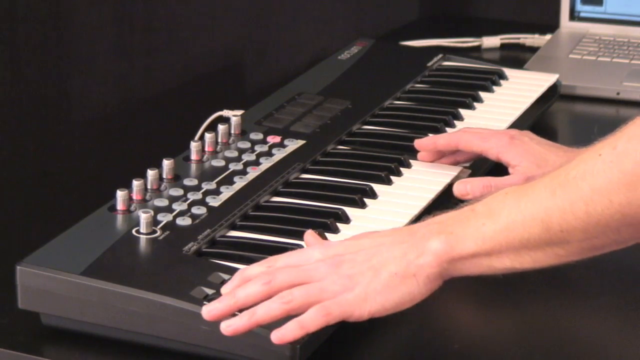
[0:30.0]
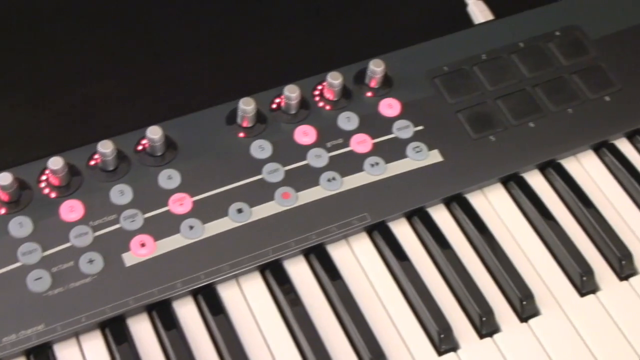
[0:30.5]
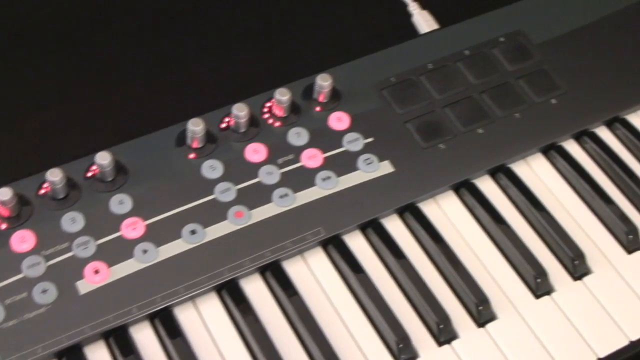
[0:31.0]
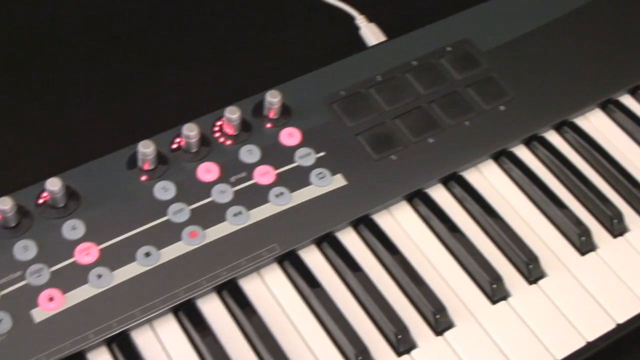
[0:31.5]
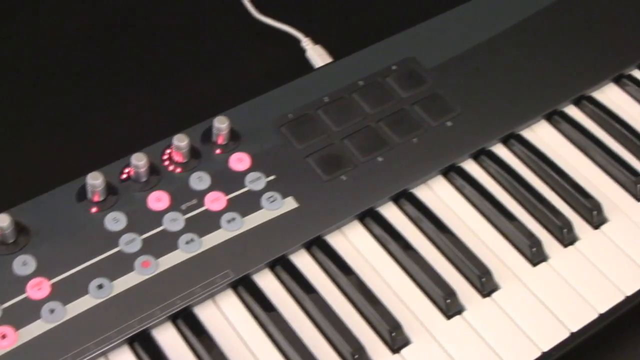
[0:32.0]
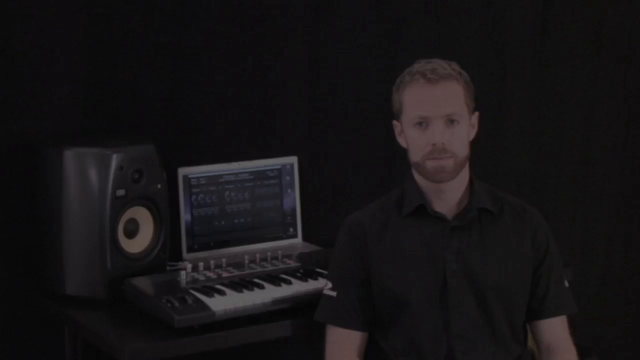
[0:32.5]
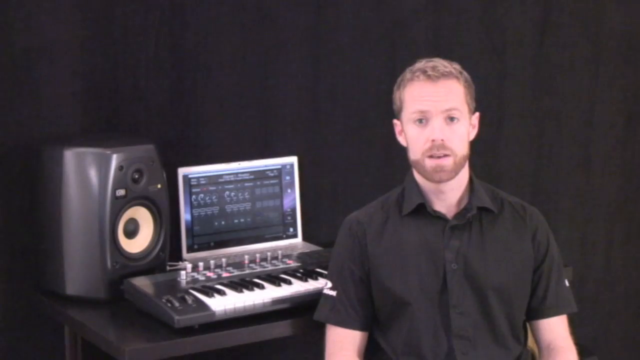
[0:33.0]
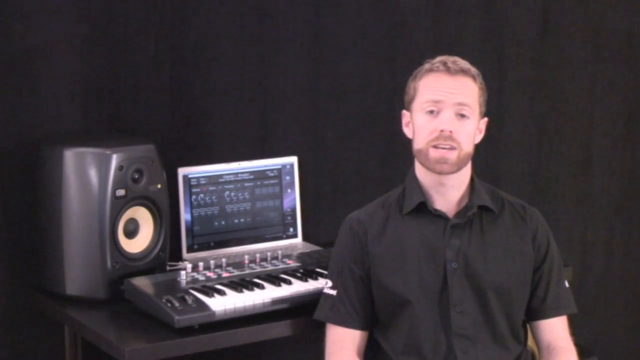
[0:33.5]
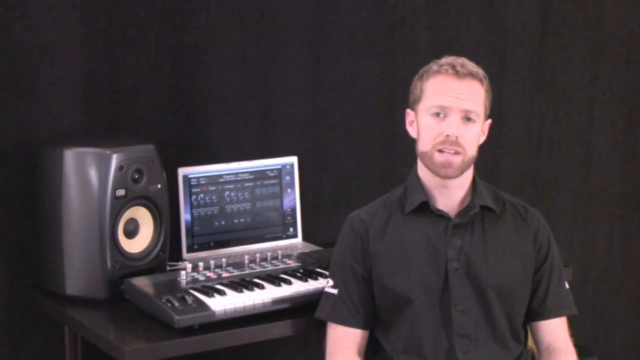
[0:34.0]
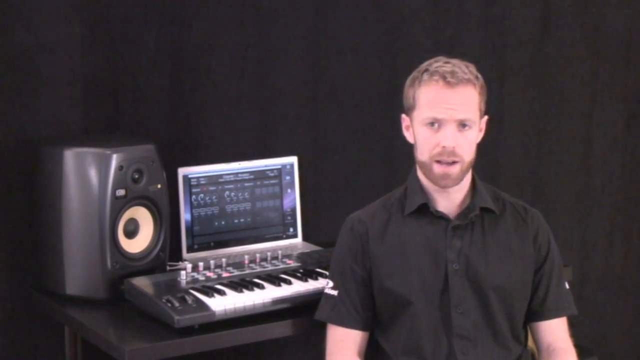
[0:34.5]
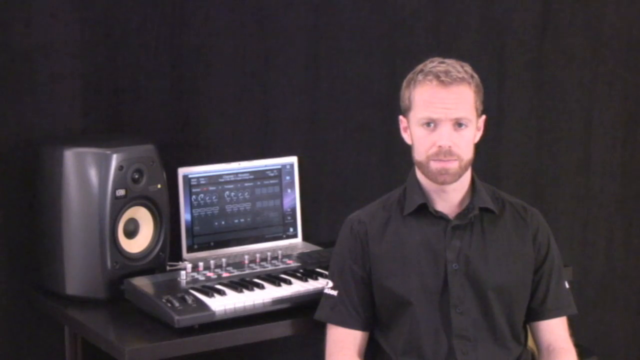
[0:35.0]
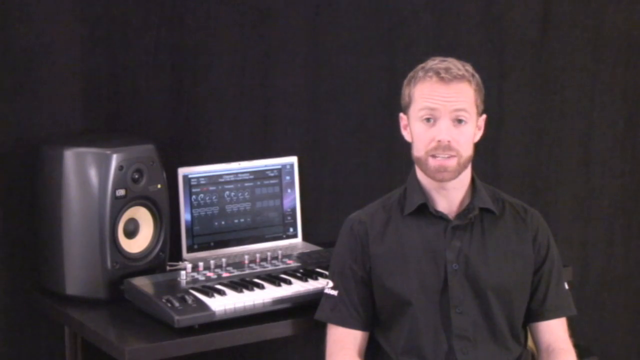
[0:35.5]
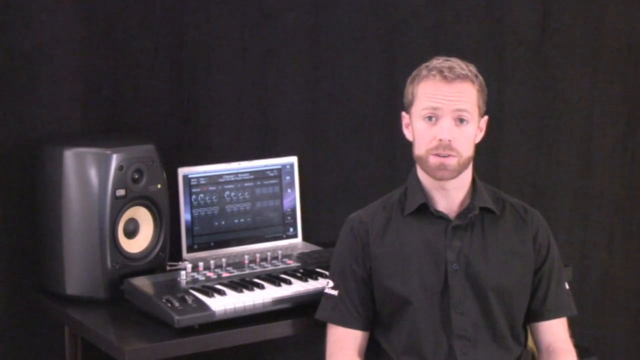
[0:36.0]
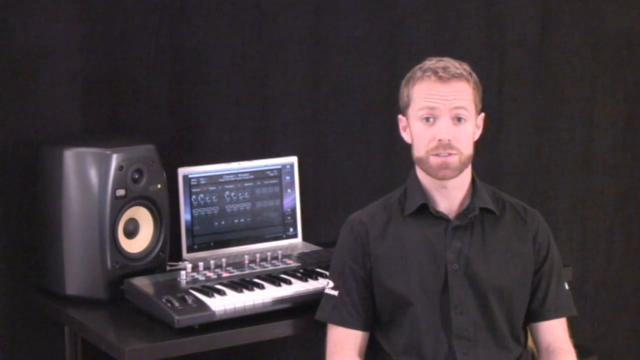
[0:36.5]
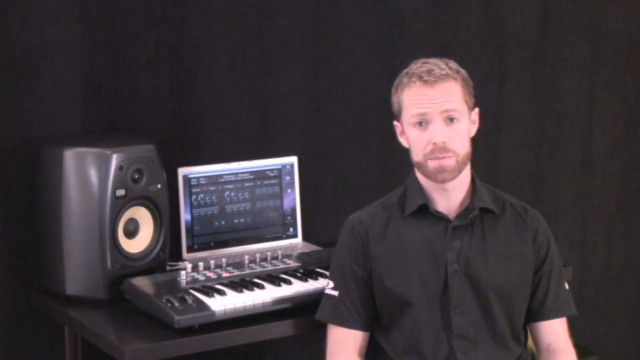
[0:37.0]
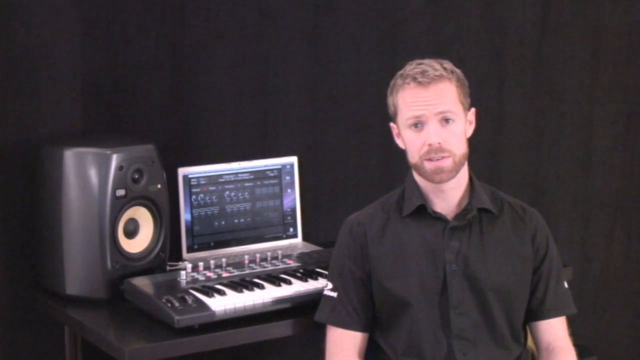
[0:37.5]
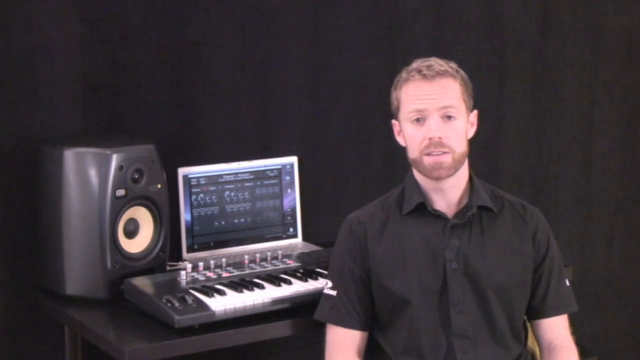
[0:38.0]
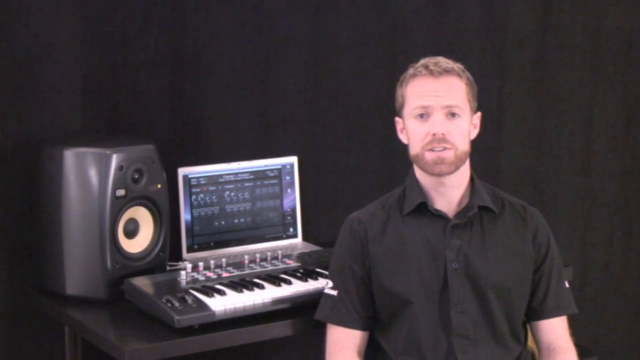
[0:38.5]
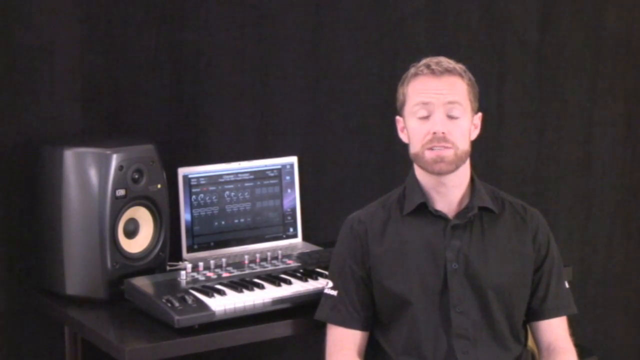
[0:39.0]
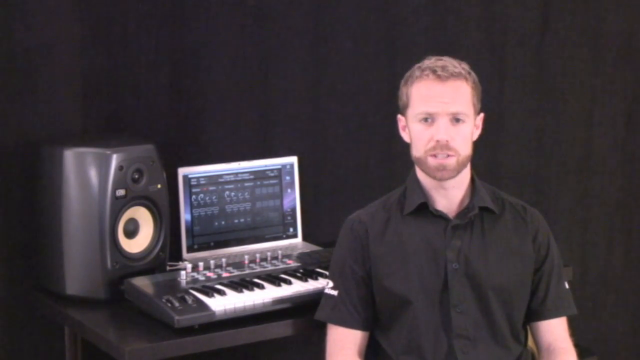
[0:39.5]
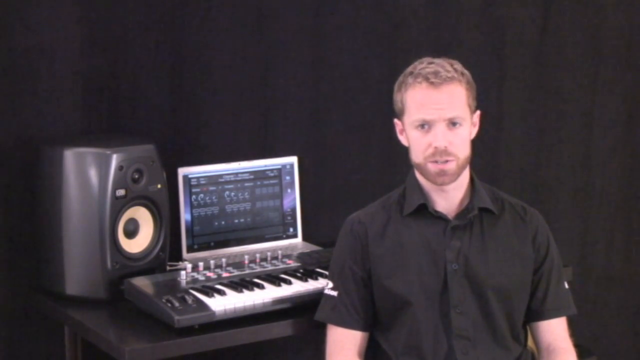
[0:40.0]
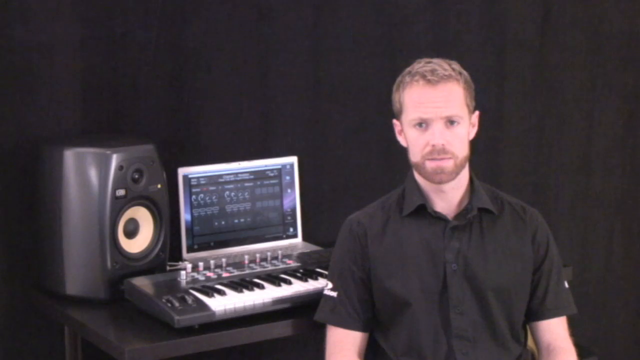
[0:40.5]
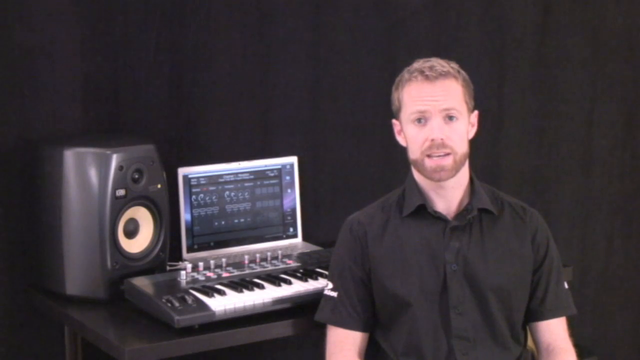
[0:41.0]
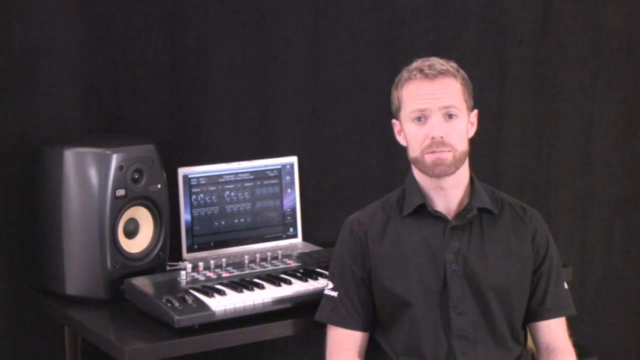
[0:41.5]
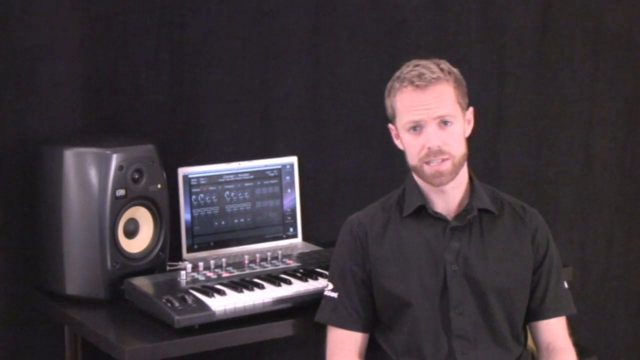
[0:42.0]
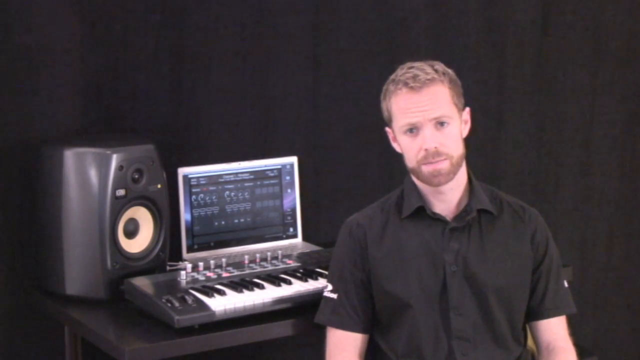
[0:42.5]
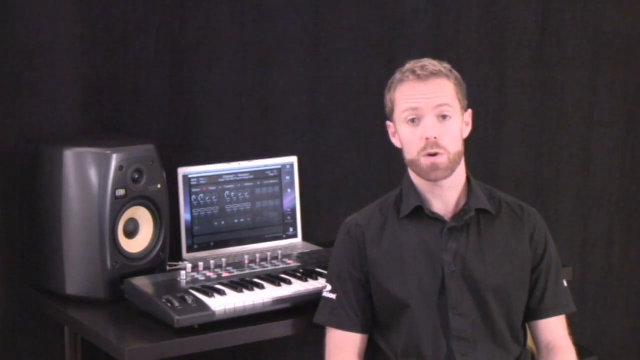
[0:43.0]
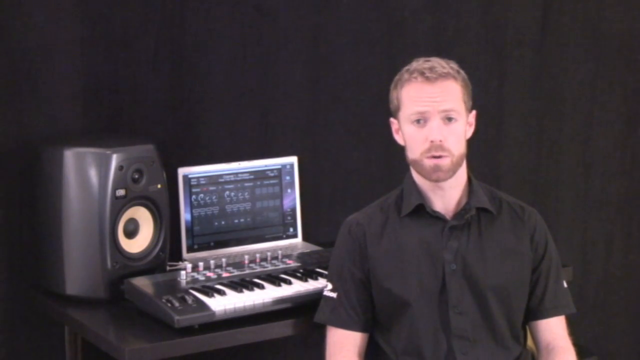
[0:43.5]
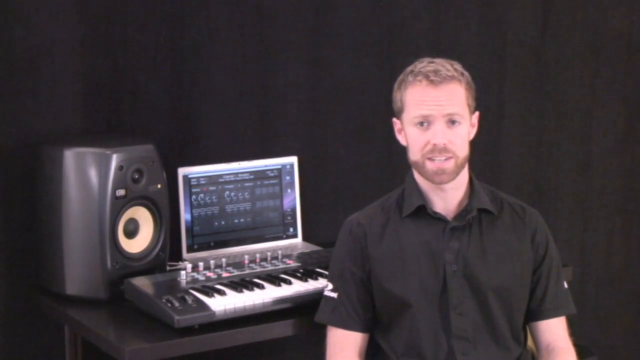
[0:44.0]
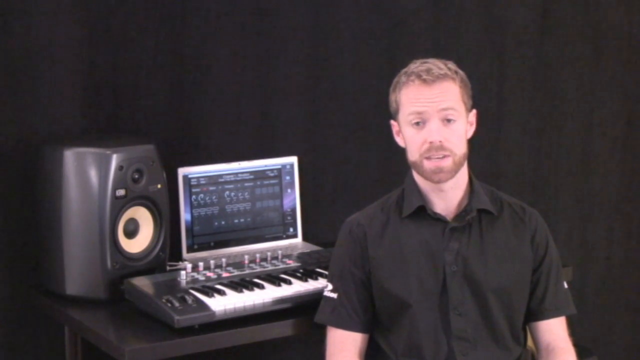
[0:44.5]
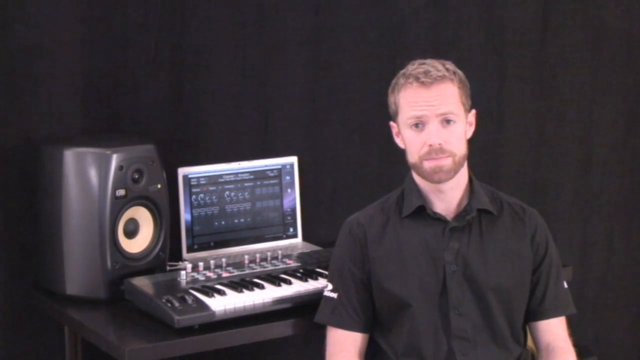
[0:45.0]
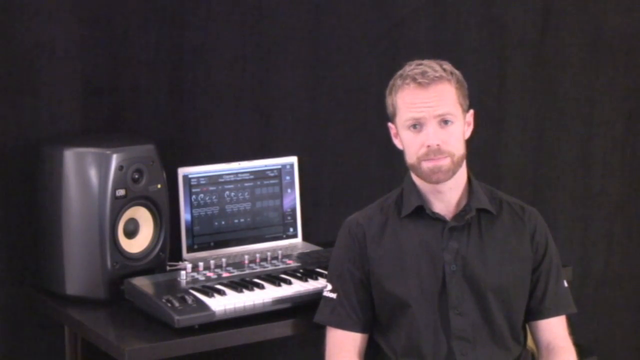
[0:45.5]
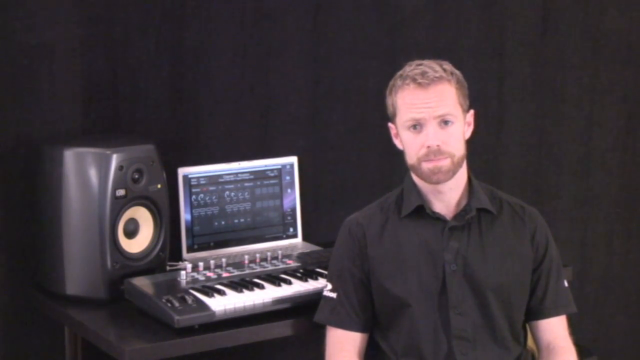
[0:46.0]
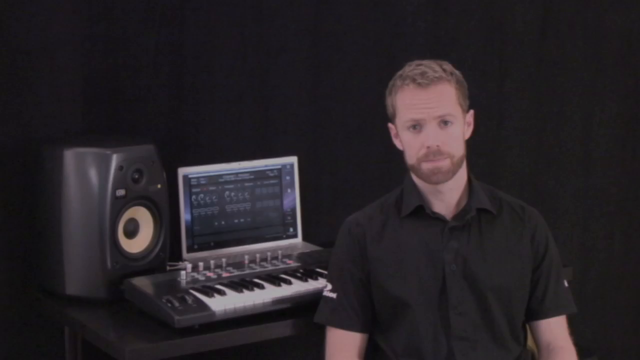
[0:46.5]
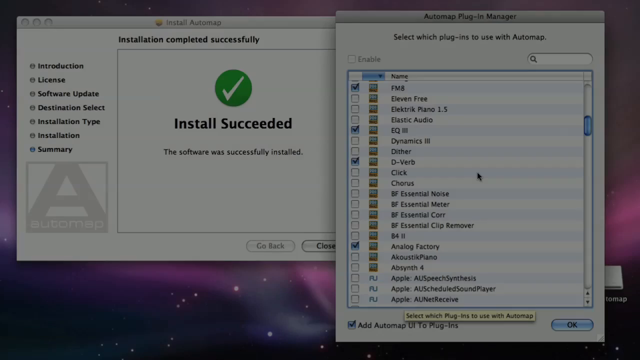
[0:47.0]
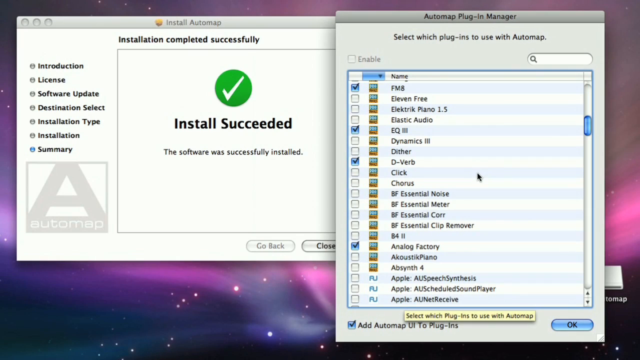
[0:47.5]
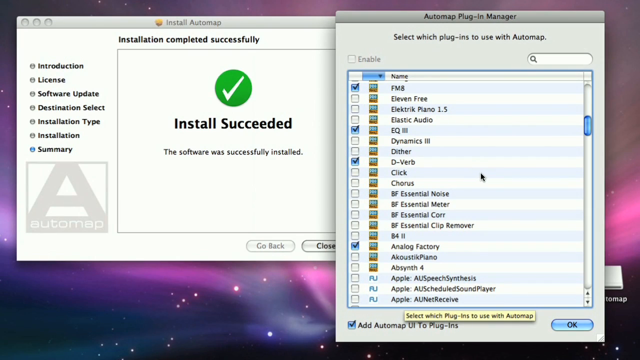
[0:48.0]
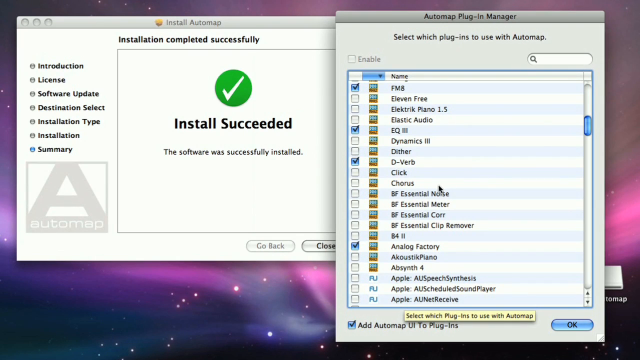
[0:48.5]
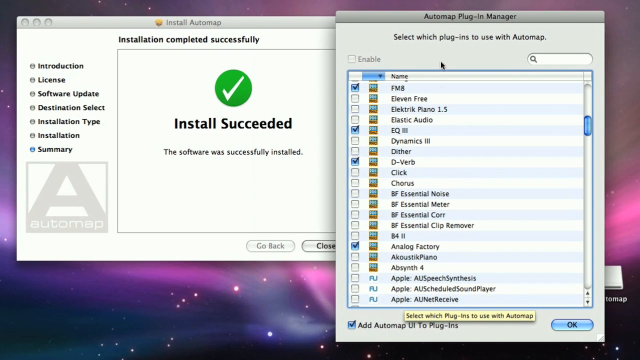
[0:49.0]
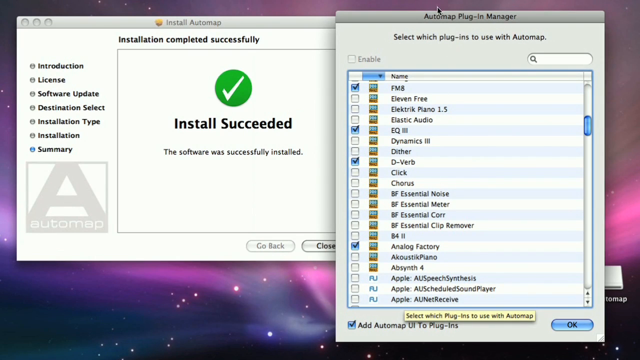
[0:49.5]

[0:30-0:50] Various controls on the keyboard are shown: some pink or grey buttons, and rotary dials, some of which have lights around them, presumably indicating how far they have been turned. There is what looks like a touchpad in the upper right corner. The video returns to the man in the black sleeveless shirt, sitting at the right-hand side of the keyboard; in front of the keyboard is a silver laptop, to the left of that is a speaker, and behind him is a black curtain. He speaks to the camera. He has a neatly trimmed beard and medium-length hair, and makes only very subtle movements of his head and neck, with no hand movements at all. The scene then changes to a completed software installation: two dialogues are shown, one in the background showing an installation completed successfully with a green tick, and one in the foreground showing an automatic plug-in manager, through whose list the user is scrolling.